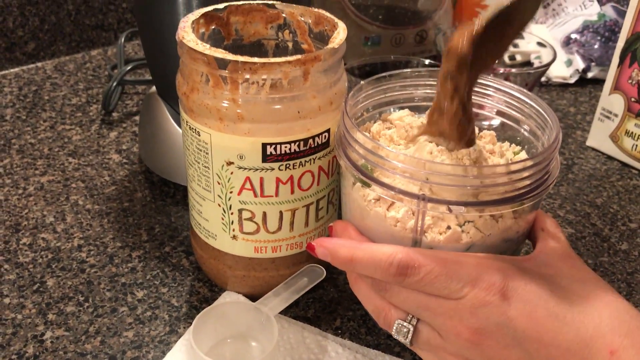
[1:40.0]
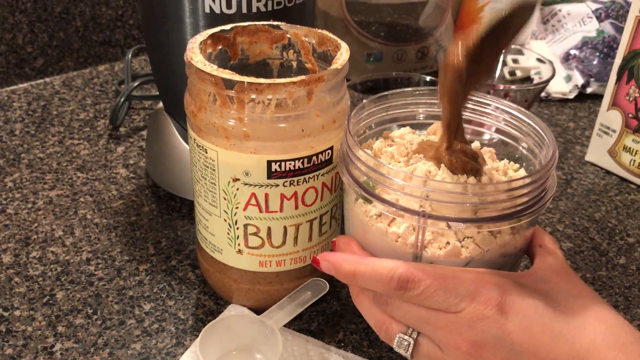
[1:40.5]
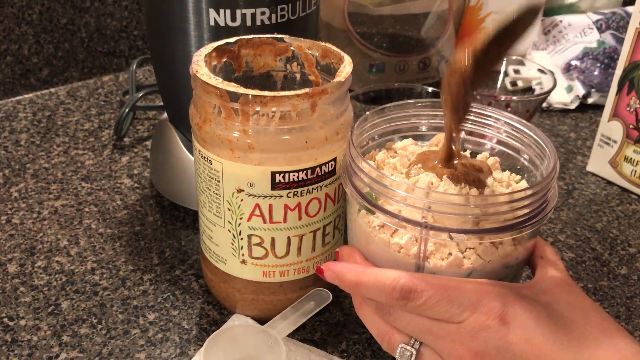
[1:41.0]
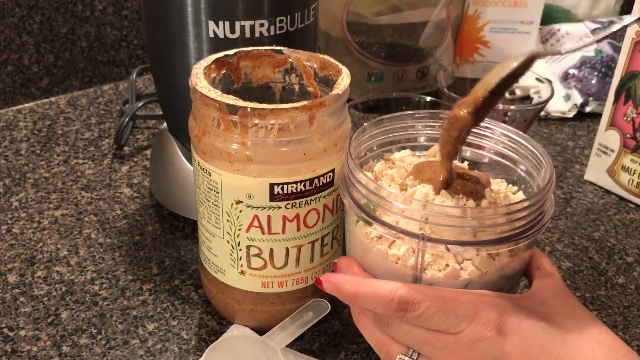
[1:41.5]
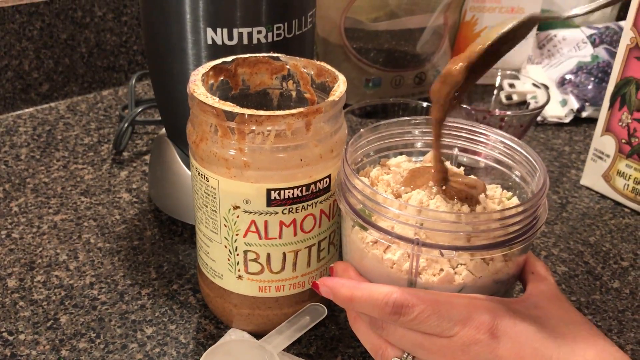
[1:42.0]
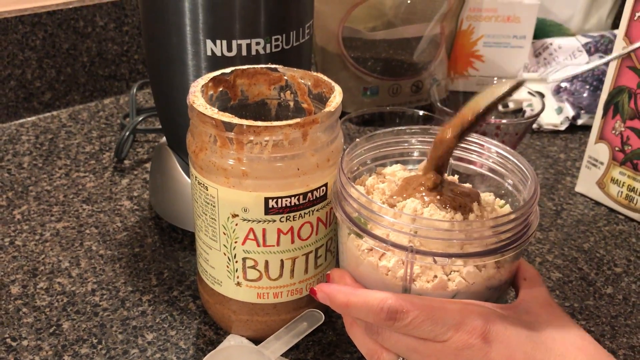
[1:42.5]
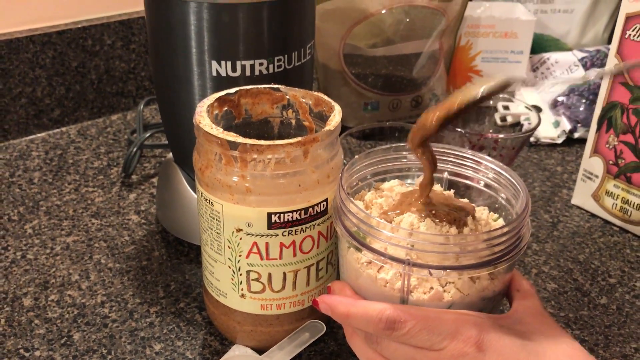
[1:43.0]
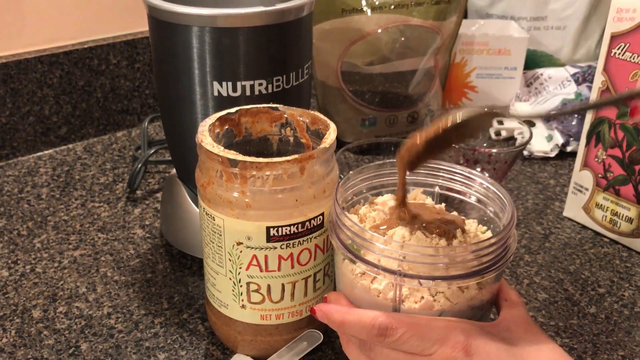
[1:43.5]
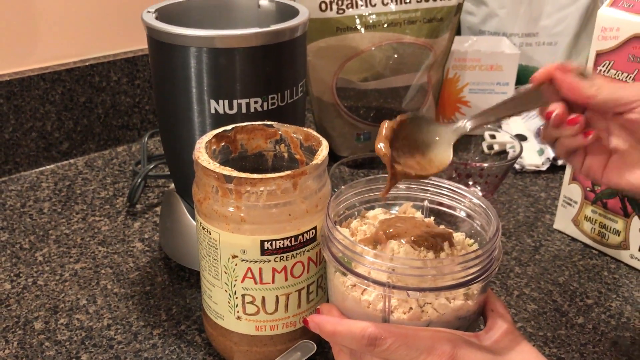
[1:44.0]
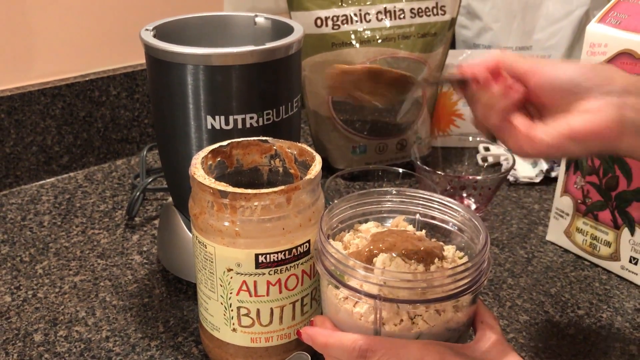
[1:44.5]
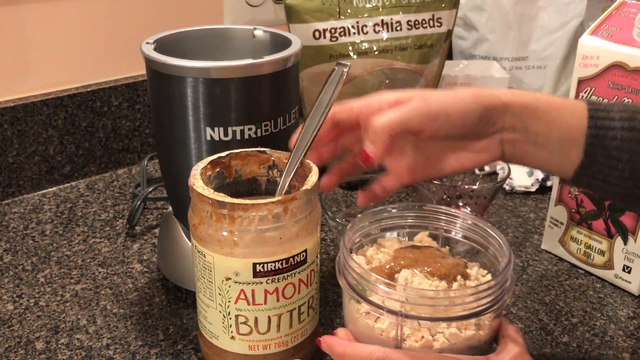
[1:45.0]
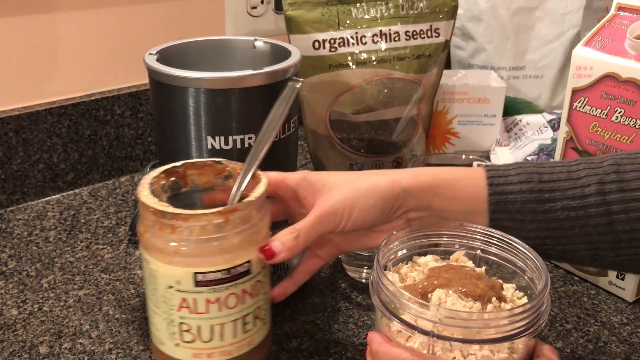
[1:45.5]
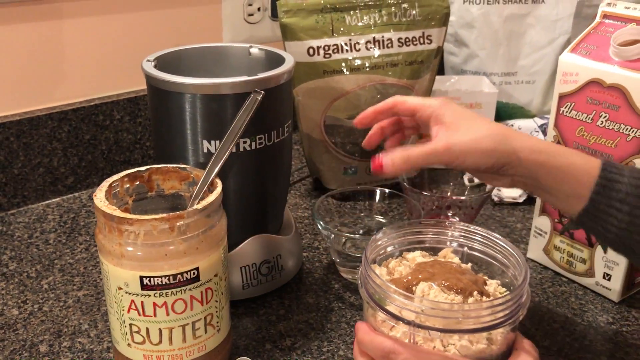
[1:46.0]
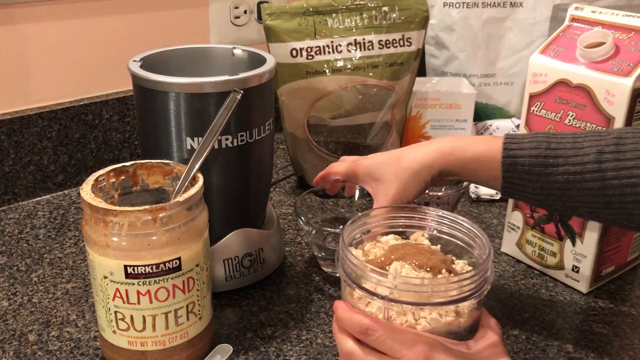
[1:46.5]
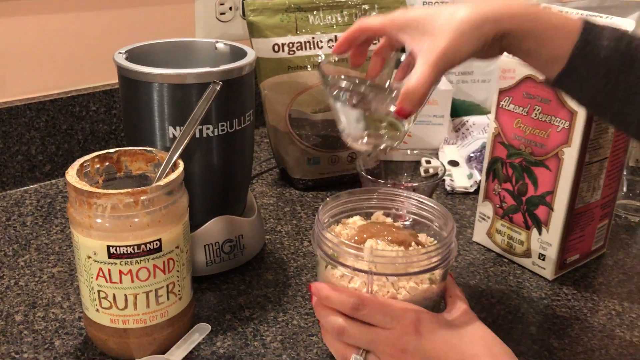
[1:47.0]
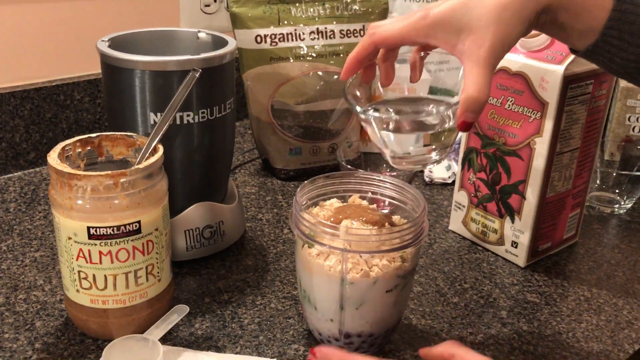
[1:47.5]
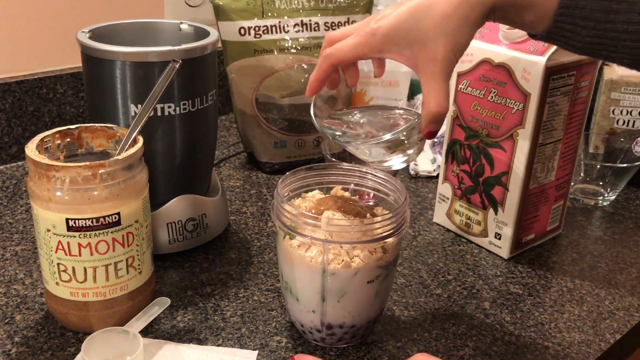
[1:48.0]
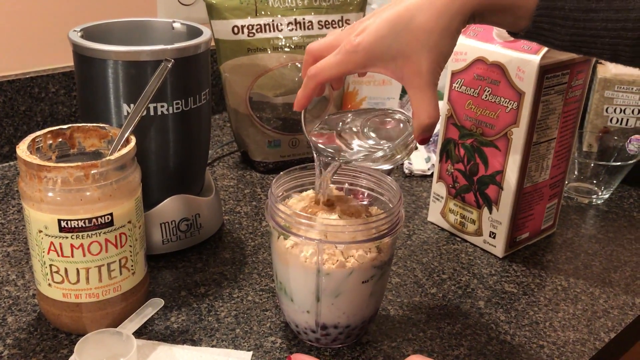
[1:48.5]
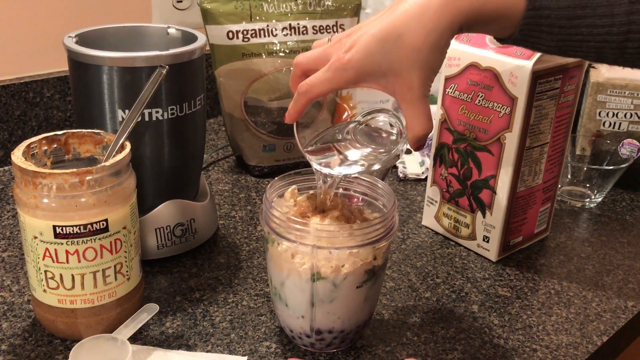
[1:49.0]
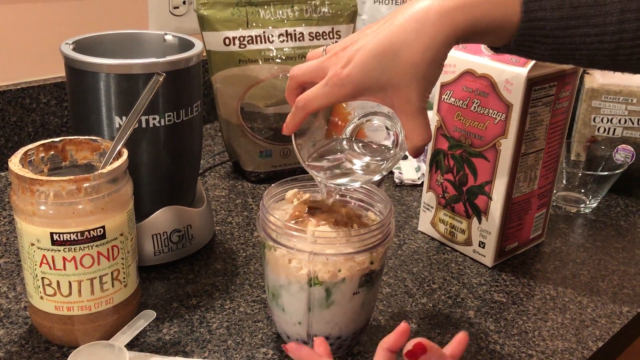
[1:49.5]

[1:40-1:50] The woman adds the almond butter to the blender jar, on top of the dry ingredients added earlier, shaking the spoon several times so that all the almond butter on it goes into the jar. She then picks up the bowl with water and pours all of it into the jar with the other ingredients. This appears to be the last ingredient, as the jar is now full.